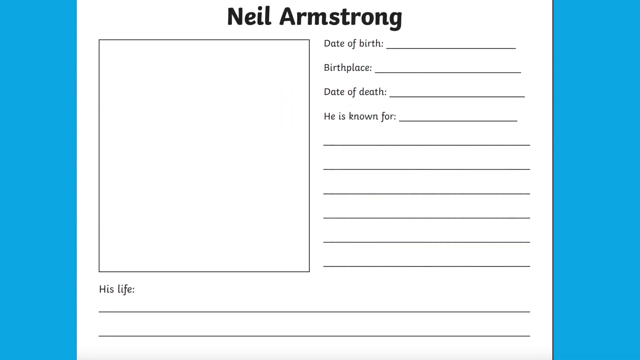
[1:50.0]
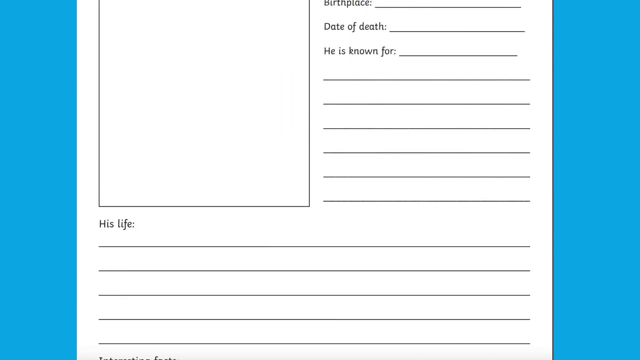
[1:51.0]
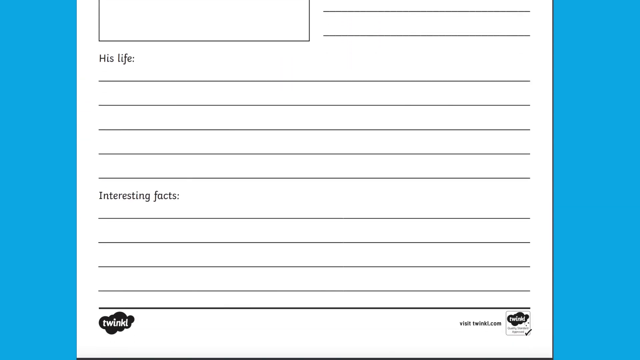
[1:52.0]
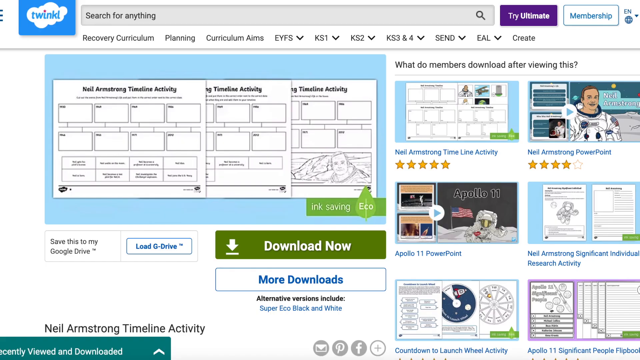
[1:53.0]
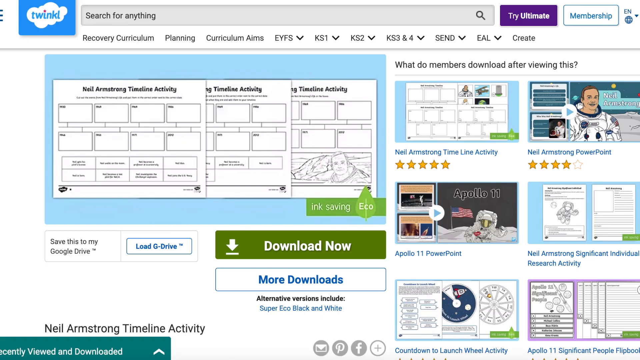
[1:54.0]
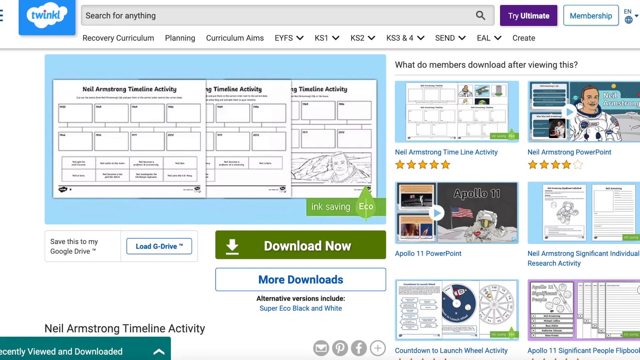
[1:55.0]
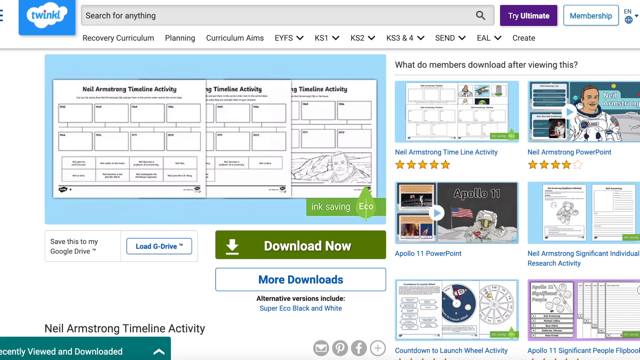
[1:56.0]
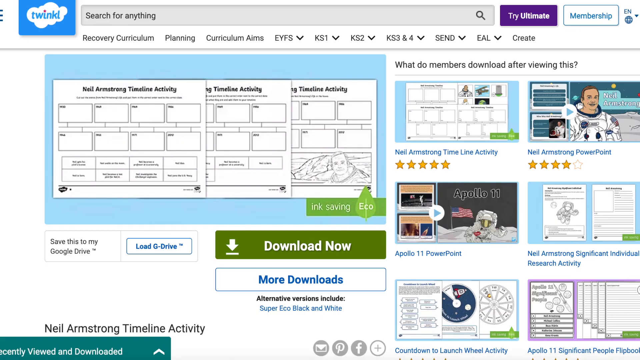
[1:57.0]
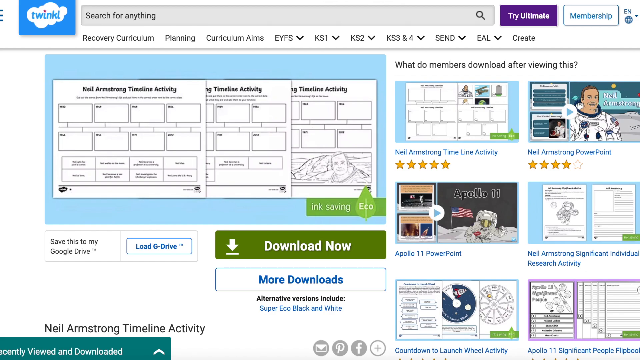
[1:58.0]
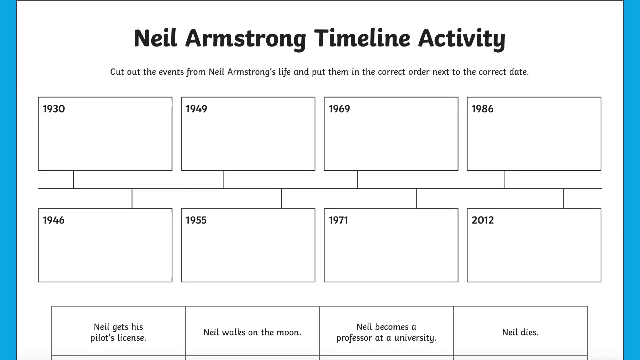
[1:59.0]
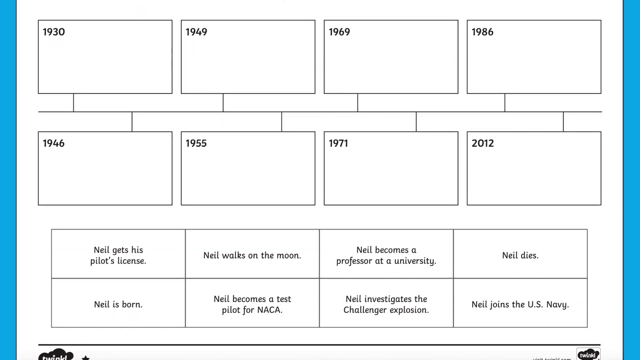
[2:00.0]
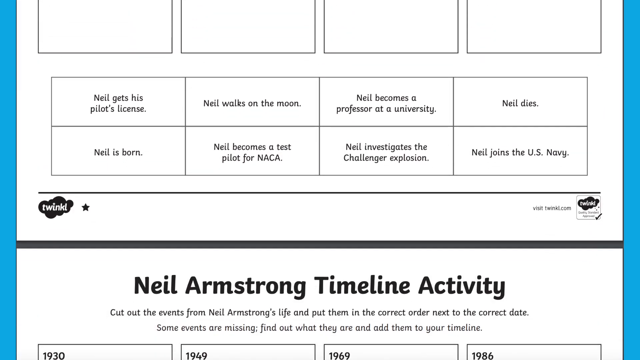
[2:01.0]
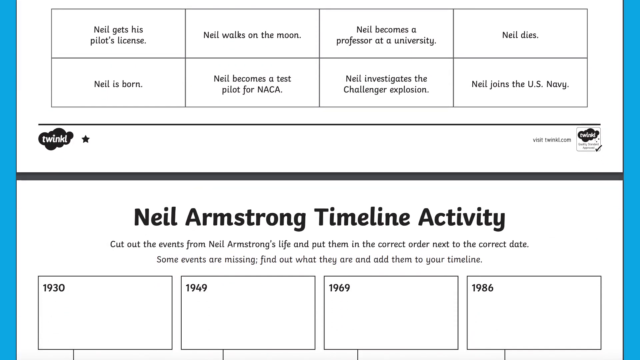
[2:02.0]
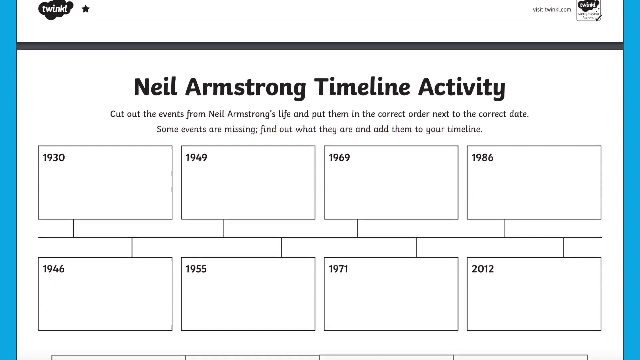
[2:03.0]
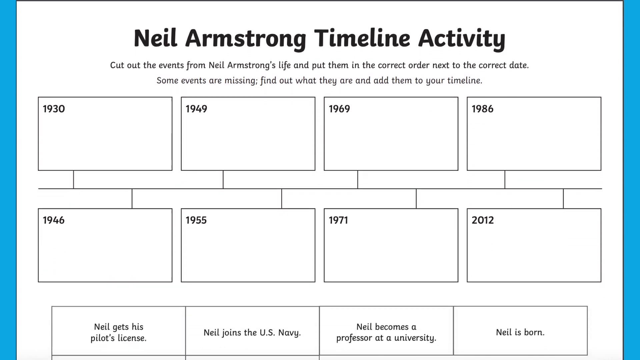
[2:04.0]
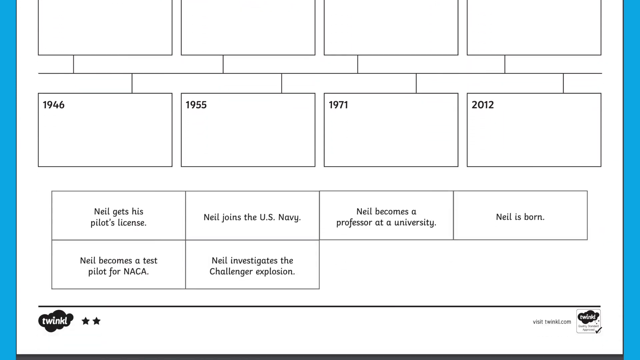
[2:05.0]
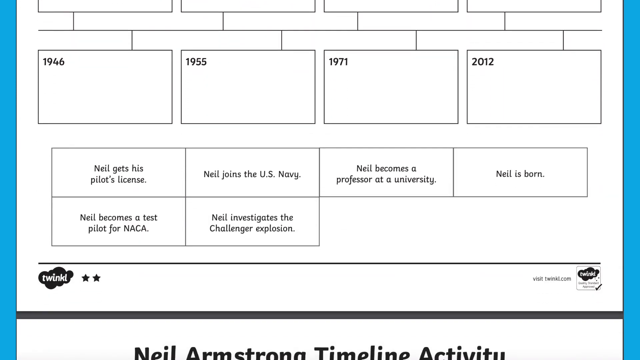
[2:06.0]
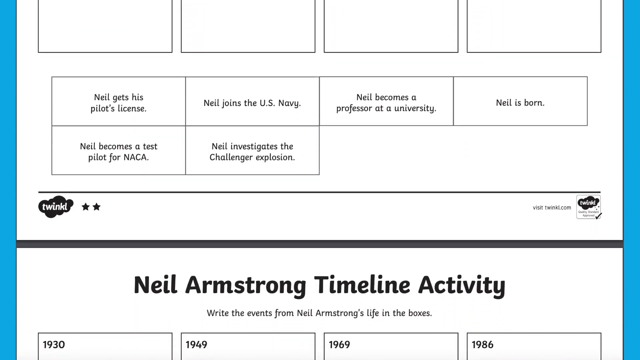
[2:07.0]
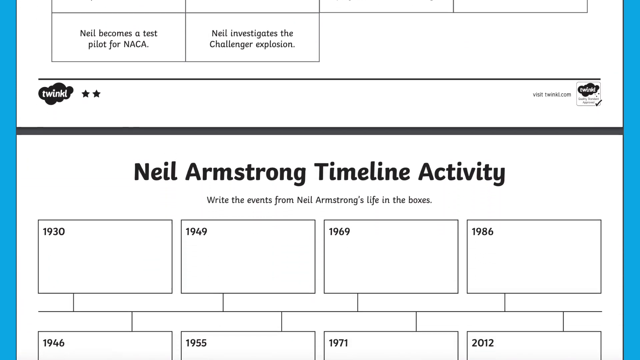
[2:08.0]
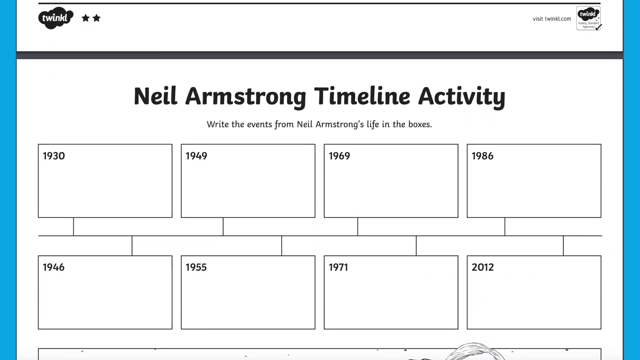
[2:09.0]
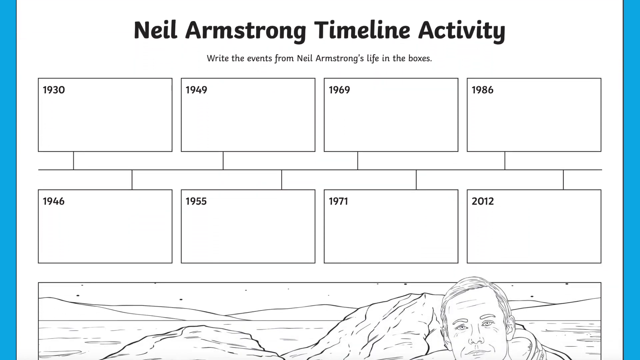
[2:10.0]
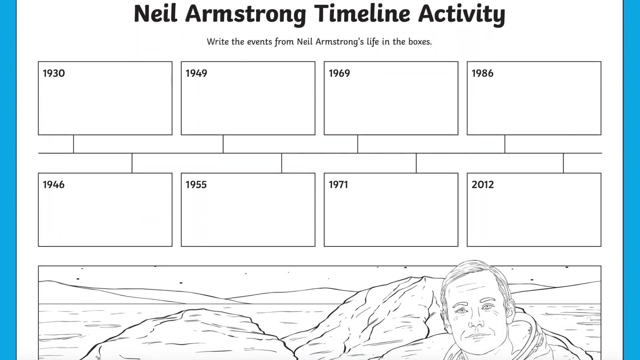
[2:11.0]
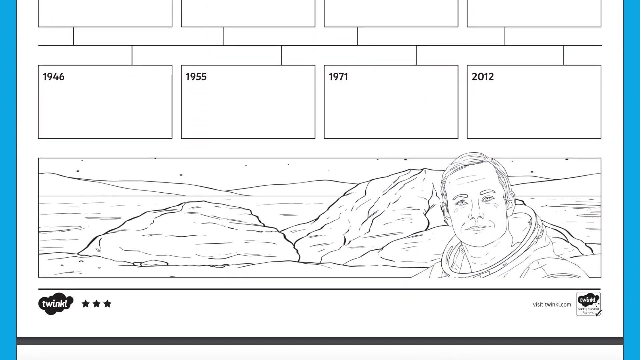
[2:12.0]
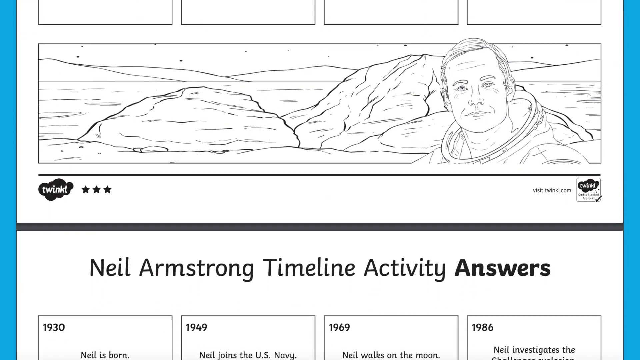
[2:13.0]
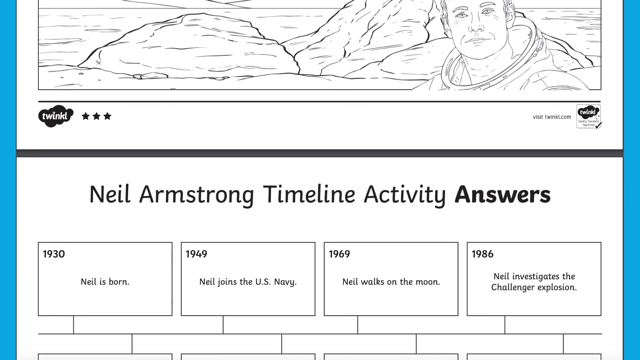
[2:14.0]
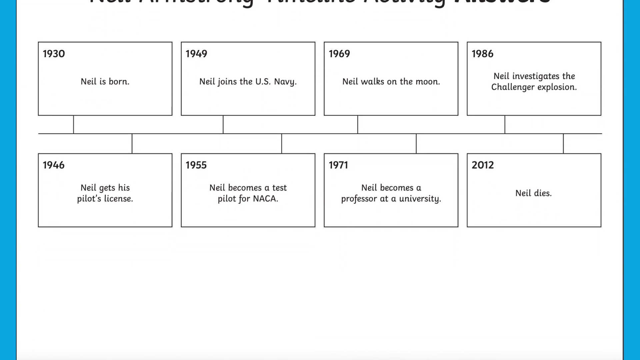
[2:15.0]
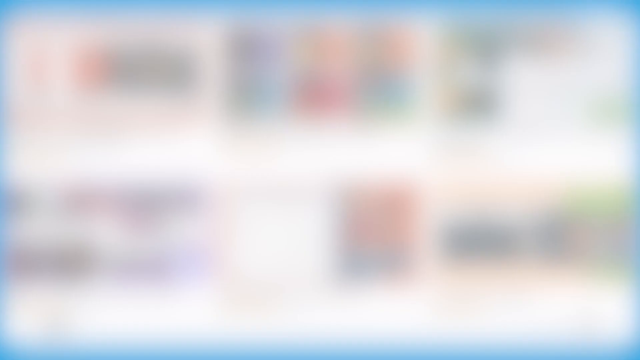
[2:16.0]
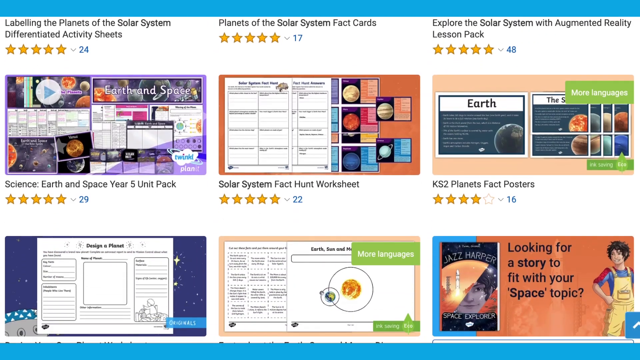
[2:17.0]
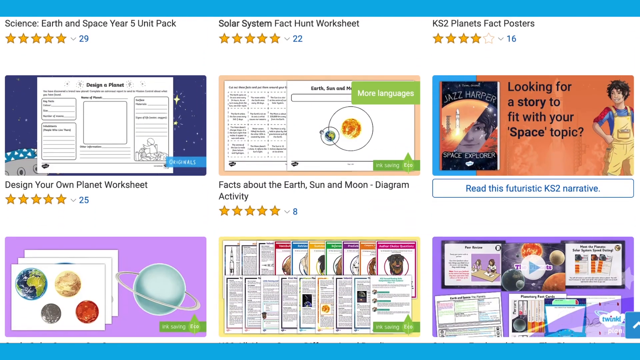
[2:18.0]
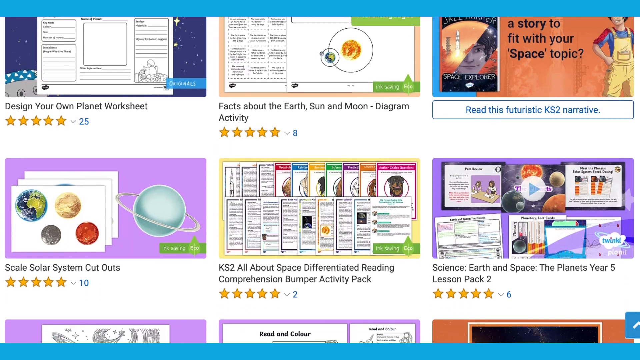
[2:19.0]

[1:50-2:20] A worksheet page about Neil Armstrong has fill-in spaces for his date of birth, his birthplace and his date of death, several lines for what he is known for, several lines under his life, and a section for interesting facts about him. A Neil Armstrong timeline activity page follows, running through the years 1930, 1949, 1969, 1986 and onward up to 2012. The view scrolls down through several pages of the timeline activity.